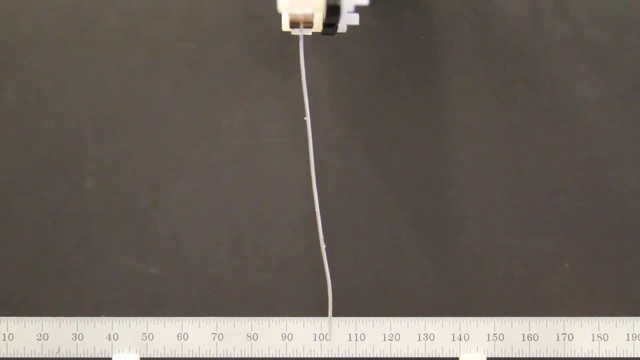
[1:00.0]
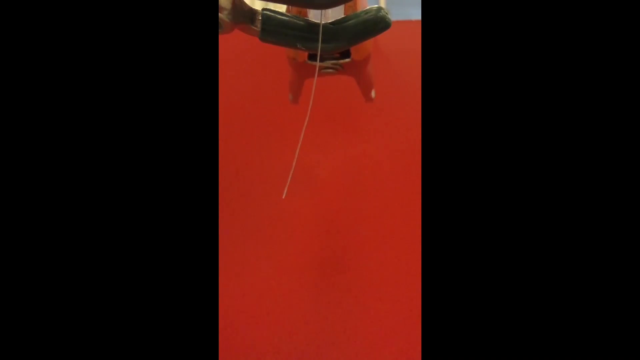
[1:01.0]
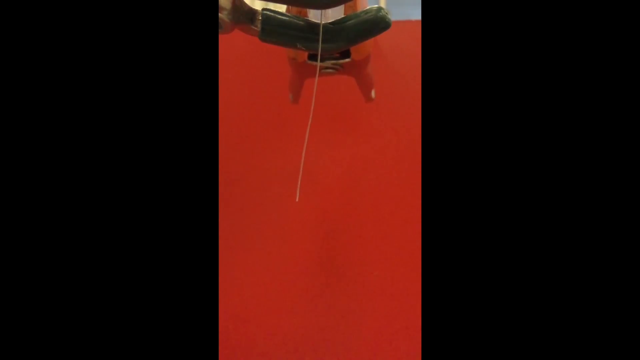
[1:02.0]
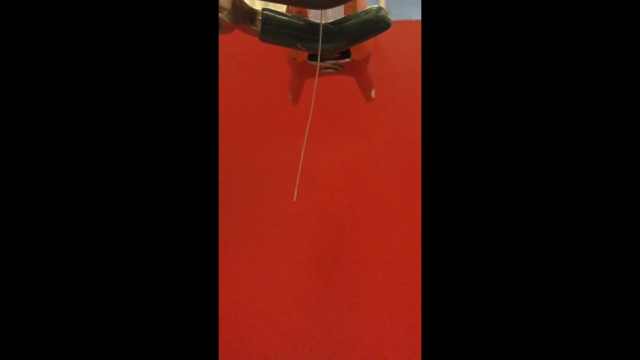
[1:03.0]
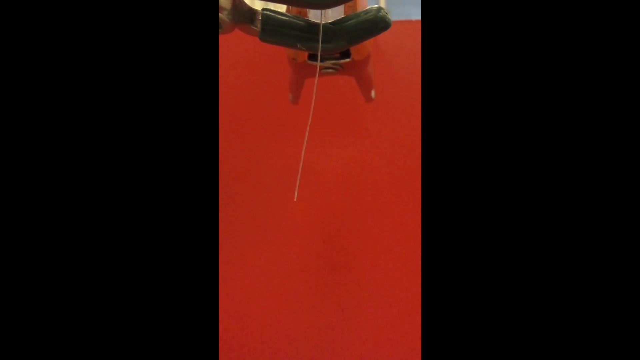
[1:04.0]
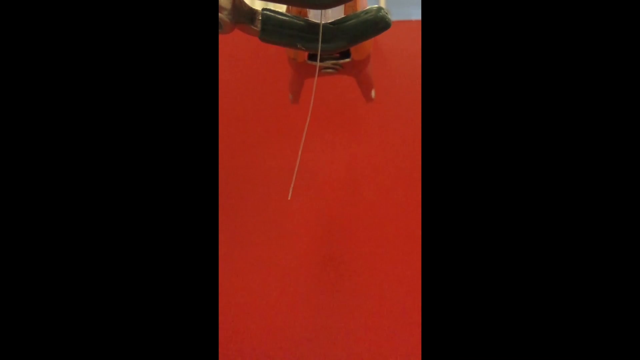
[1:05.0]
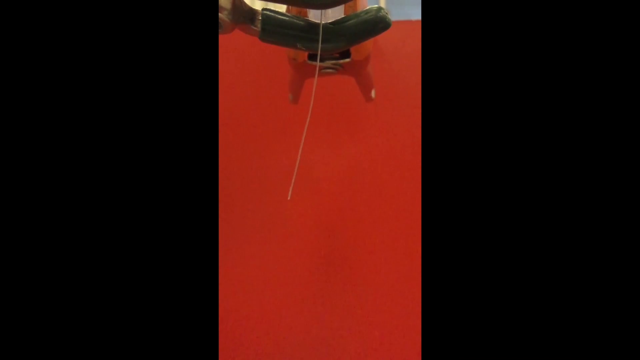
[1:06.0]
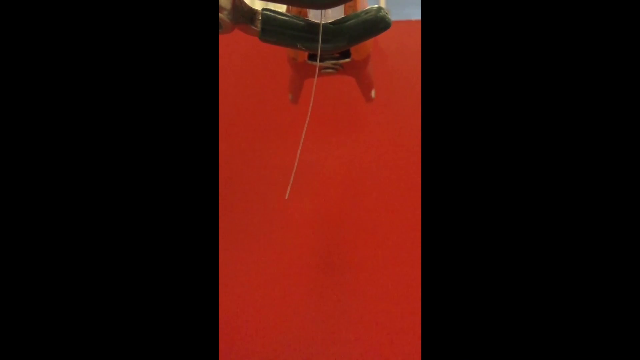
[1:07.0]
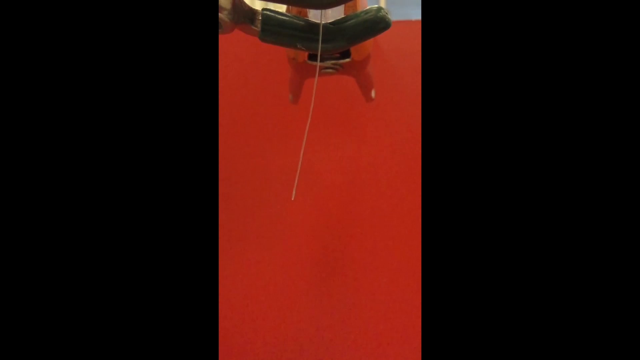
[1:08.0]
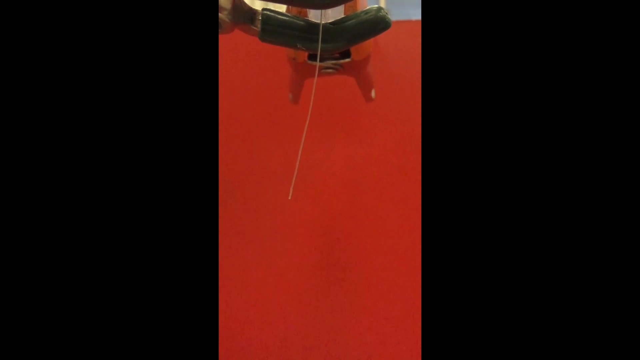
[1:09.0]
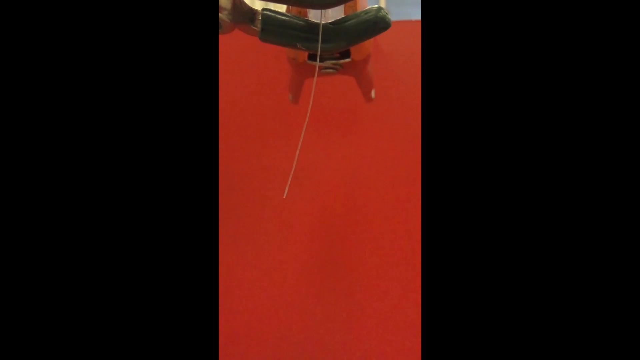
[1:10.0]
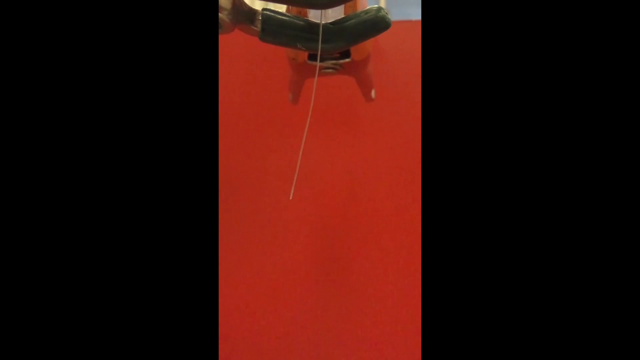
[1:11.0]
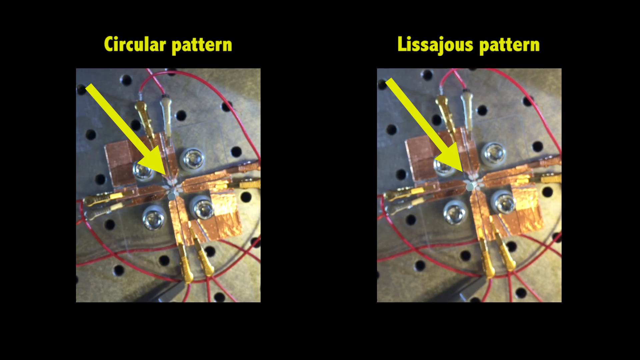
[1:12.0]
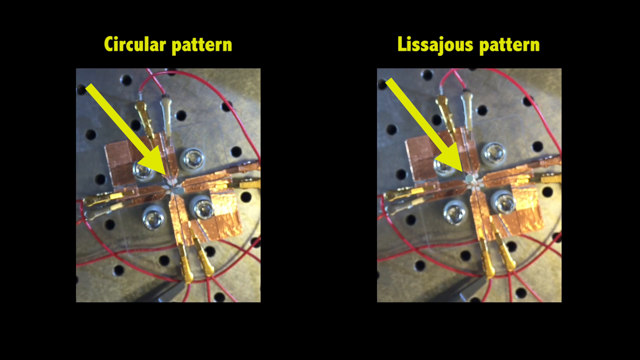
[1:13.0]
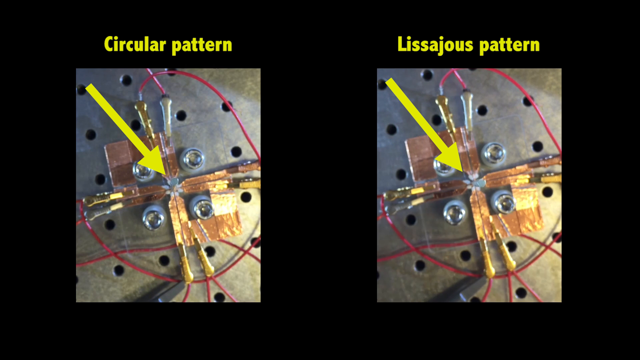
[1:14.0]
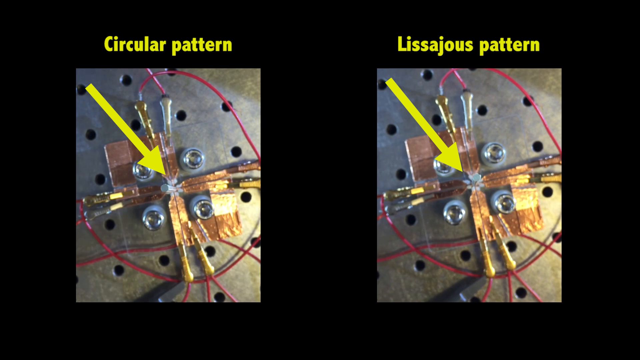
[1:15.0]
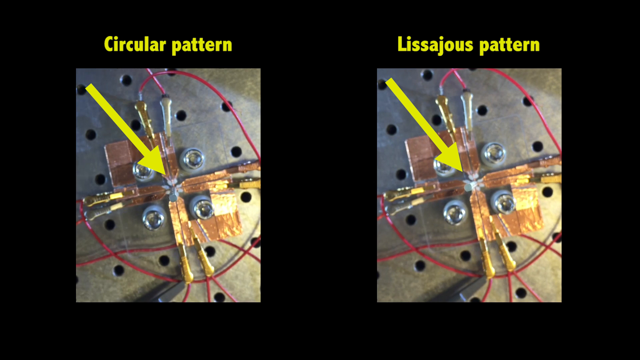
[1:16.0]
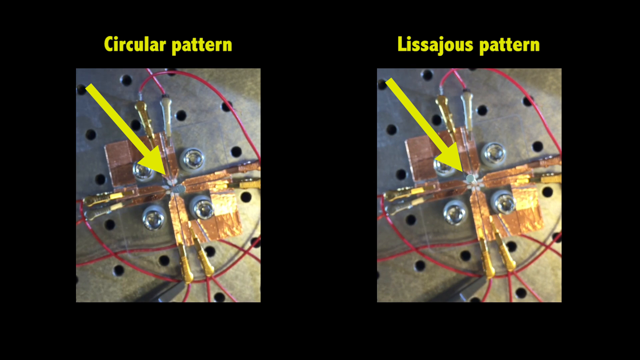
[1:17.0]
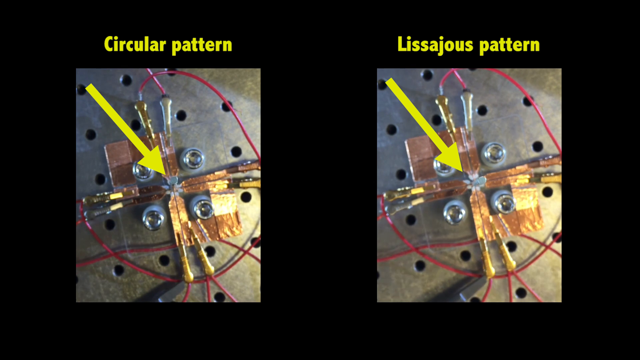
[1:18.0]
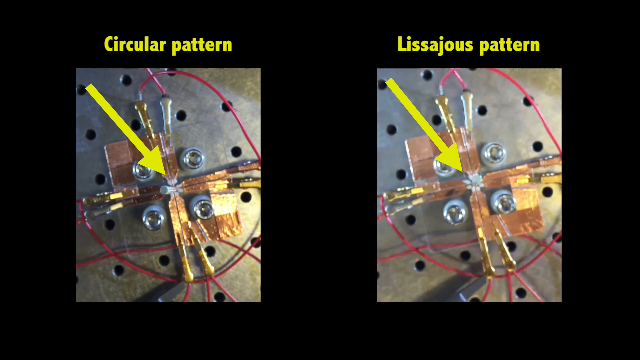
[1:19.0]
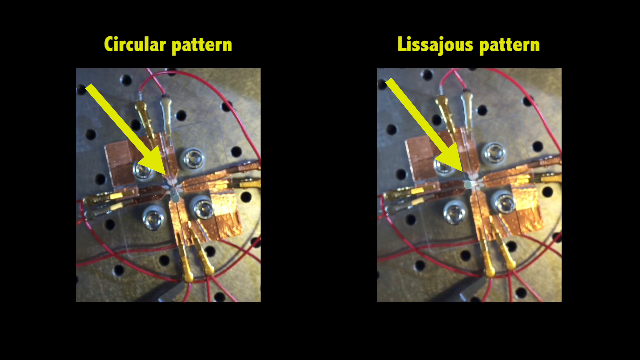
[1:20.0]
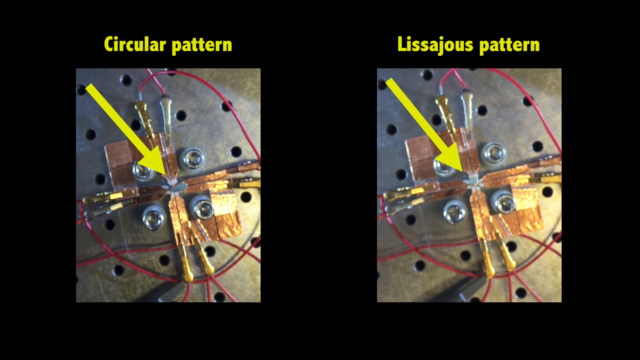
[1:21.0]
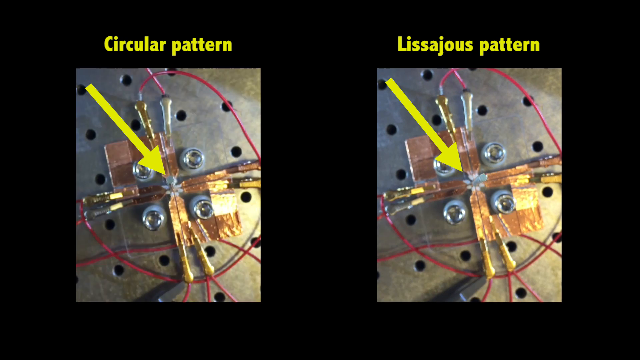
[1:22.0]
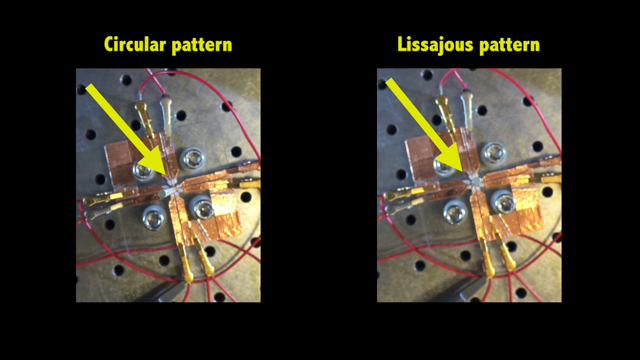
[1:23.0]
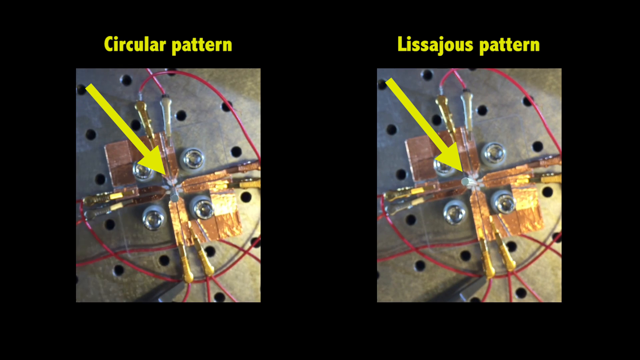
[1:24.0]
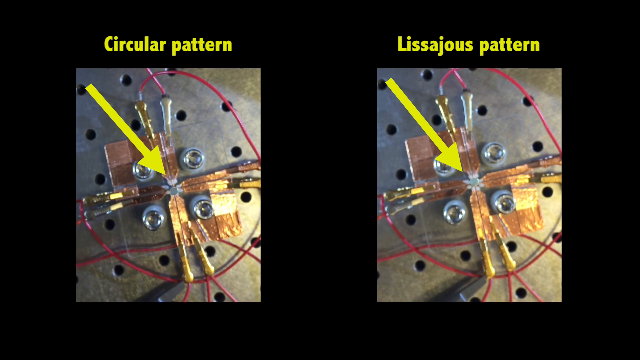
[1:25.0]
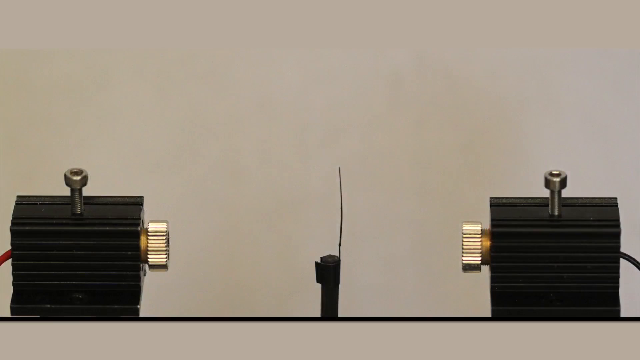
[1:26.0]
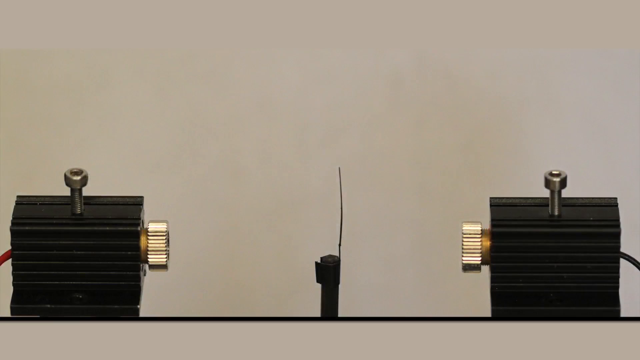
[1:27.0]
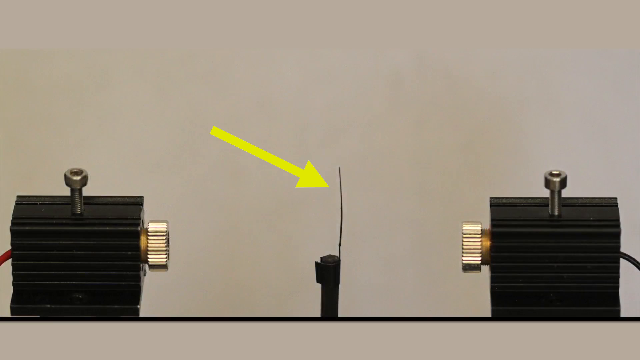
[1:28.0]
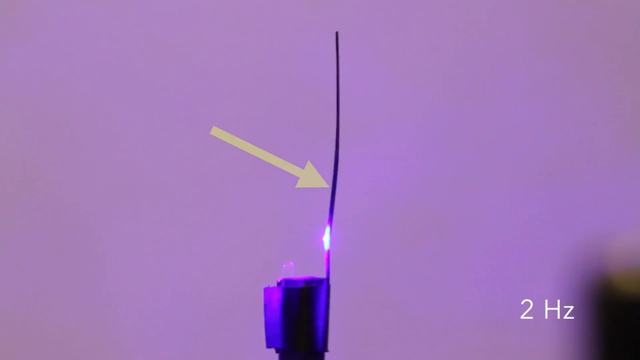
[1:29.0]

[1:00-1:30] The video switches to another image that is hard to make out. The background is red, there is a piece of gray at the top, and there is some type of unfamiliar device. It still has the string attached that was in the other device, and the string is still moving in a way that is not natural, rising higher than it should be able to on its own. Two pictures then pop up on a black background. One has yellow text that says "circular pattern", and the other has yellow text naming another pattern, with arrows pointing to it. Each picture shows a metal board with holes drilled into it and what looks like a device in the middle, made of copper, with a bunch of wires. A little silver bar in the middle moves around, and the light changes in the pictures.